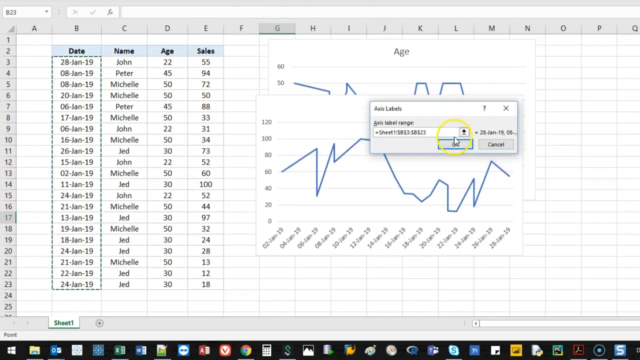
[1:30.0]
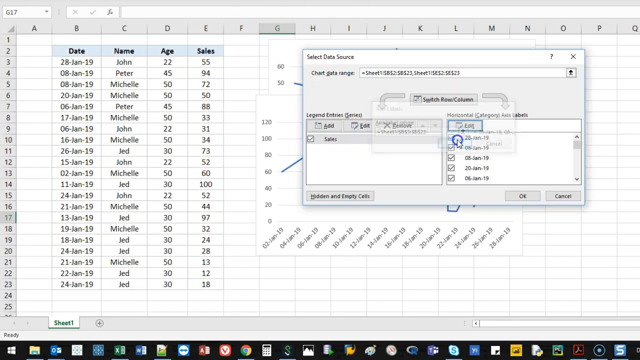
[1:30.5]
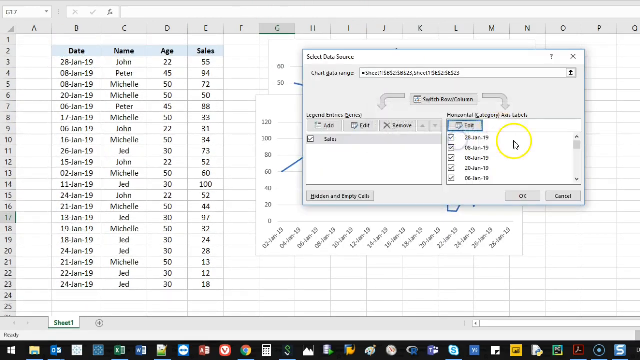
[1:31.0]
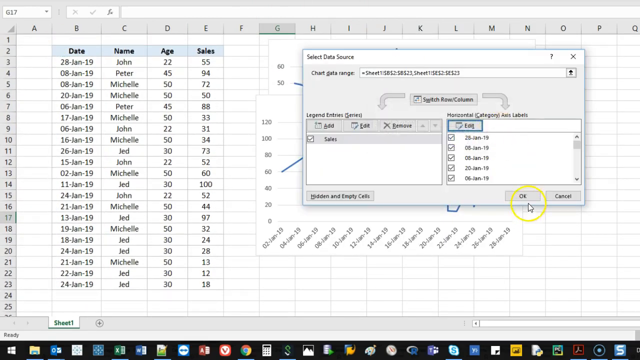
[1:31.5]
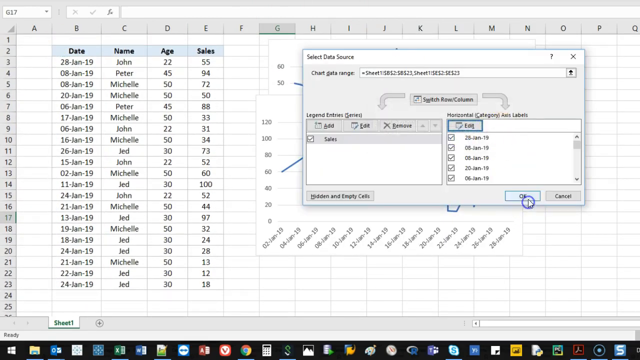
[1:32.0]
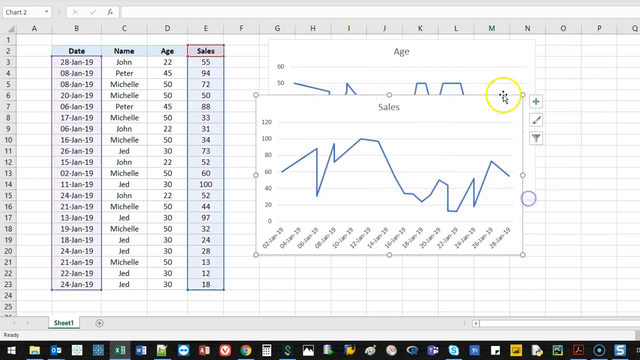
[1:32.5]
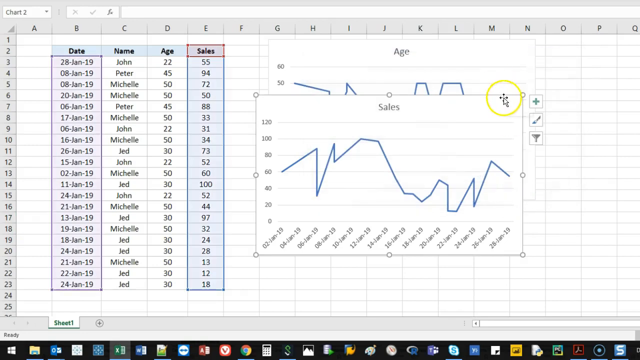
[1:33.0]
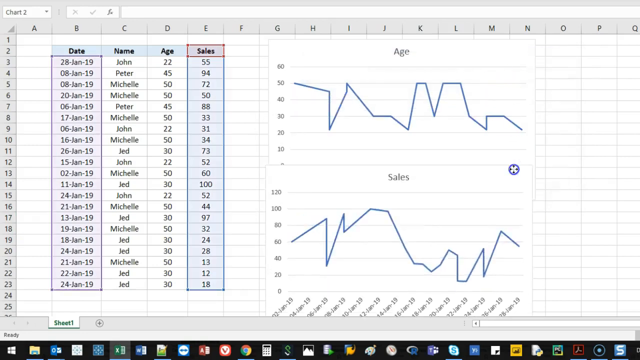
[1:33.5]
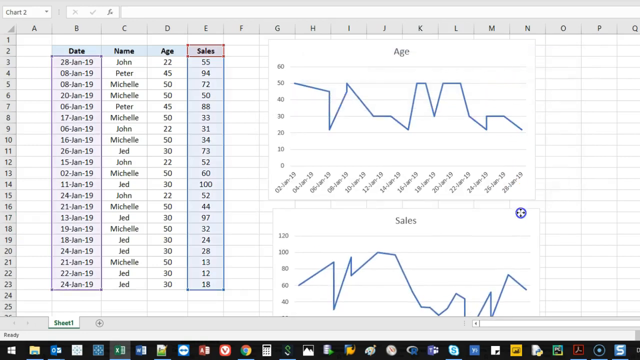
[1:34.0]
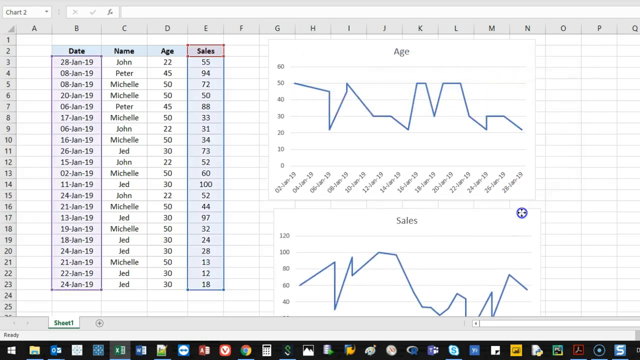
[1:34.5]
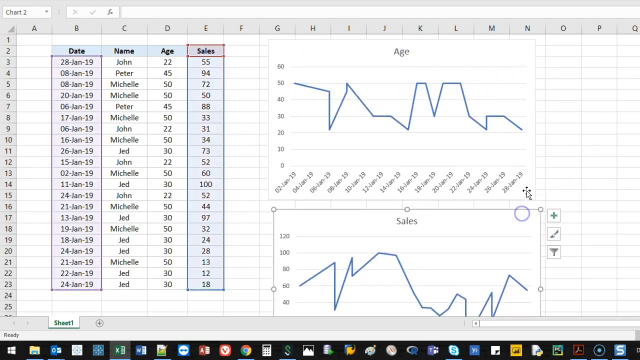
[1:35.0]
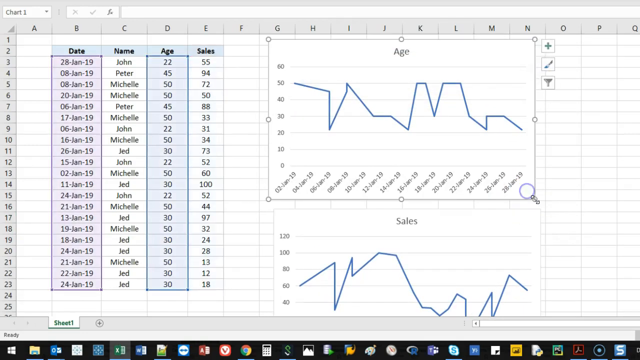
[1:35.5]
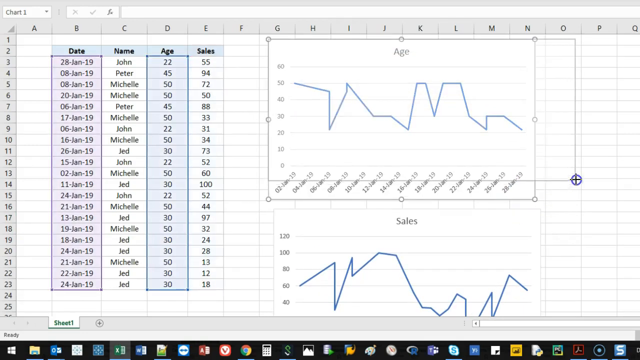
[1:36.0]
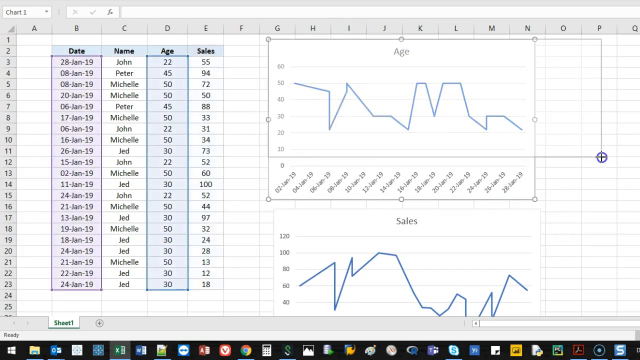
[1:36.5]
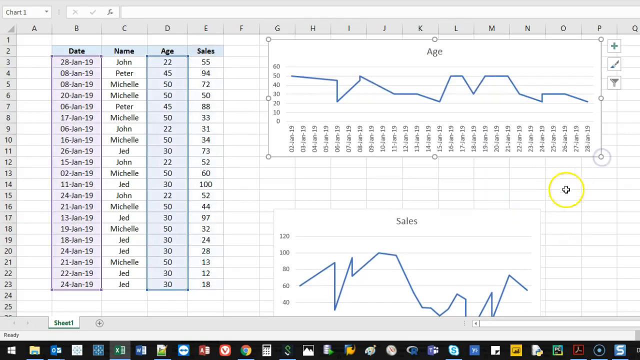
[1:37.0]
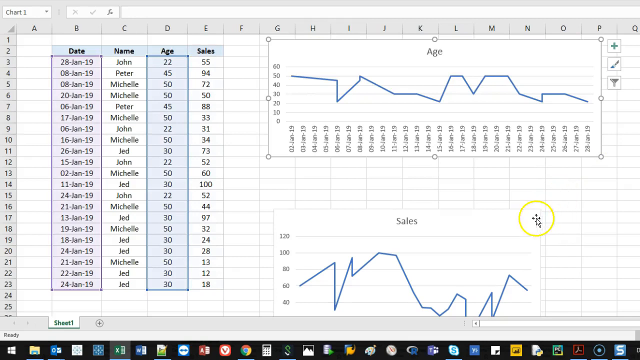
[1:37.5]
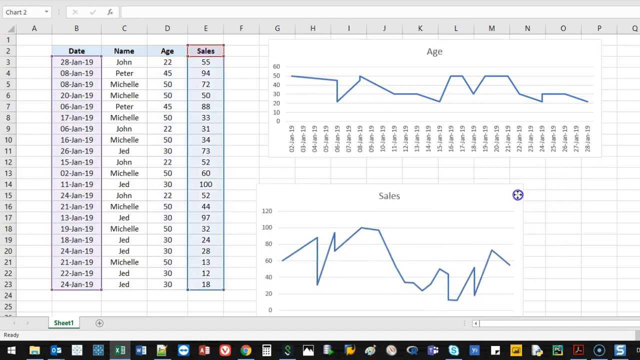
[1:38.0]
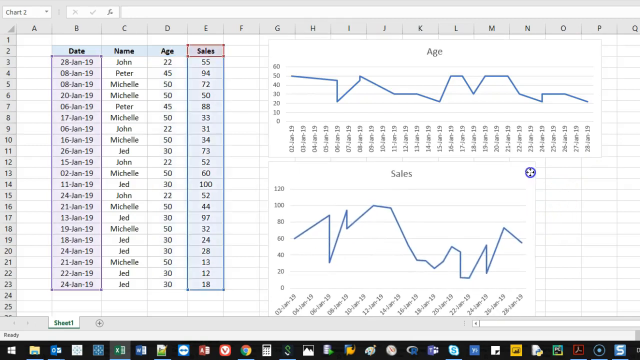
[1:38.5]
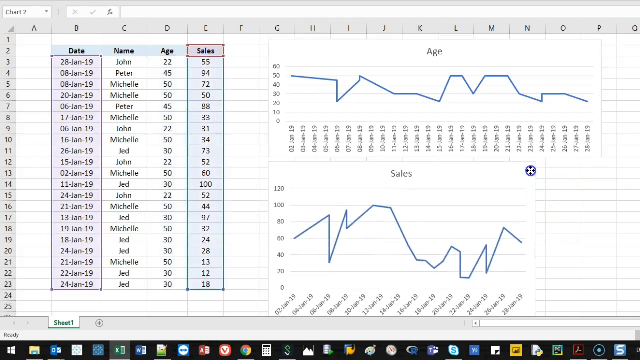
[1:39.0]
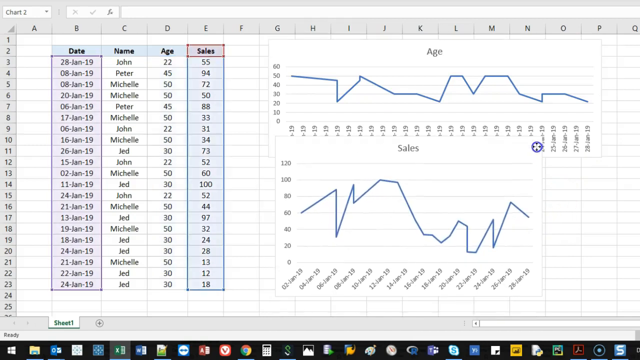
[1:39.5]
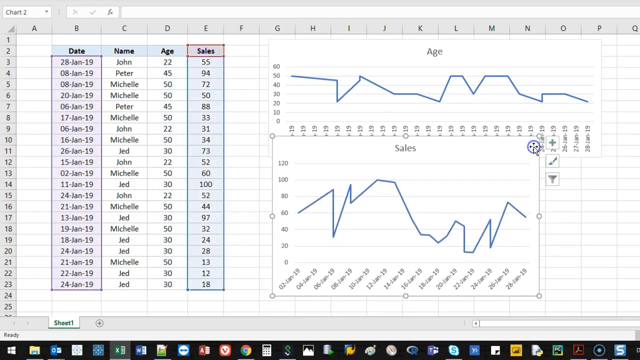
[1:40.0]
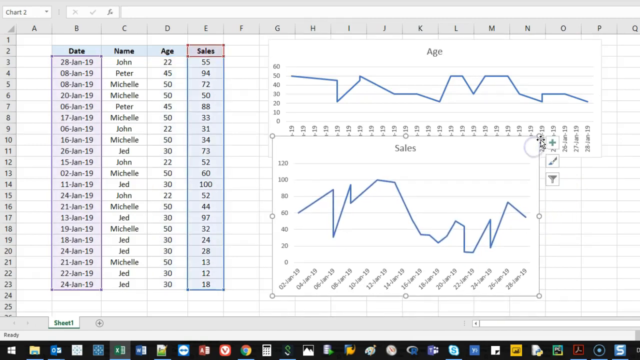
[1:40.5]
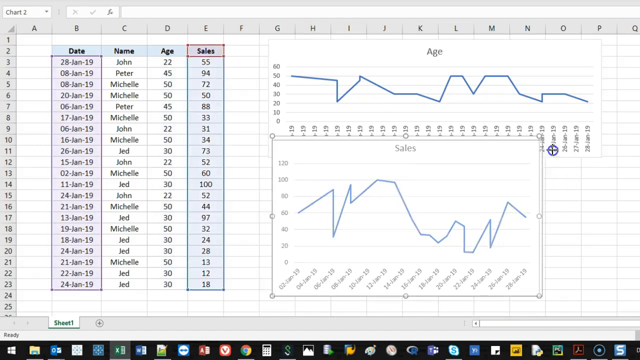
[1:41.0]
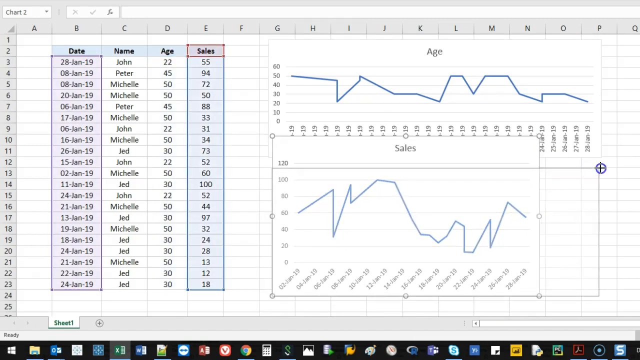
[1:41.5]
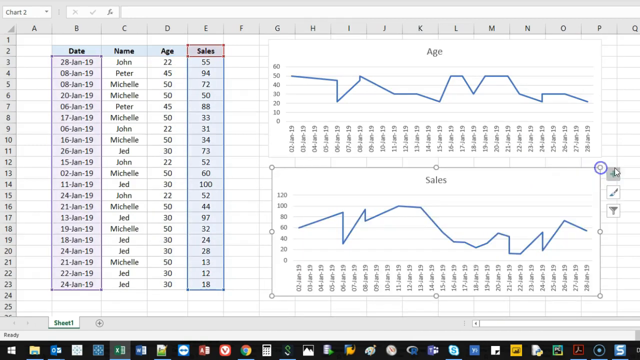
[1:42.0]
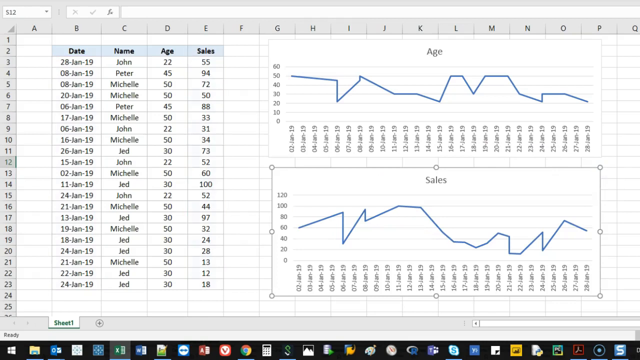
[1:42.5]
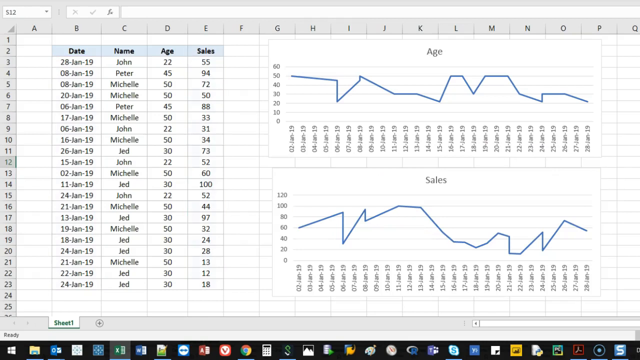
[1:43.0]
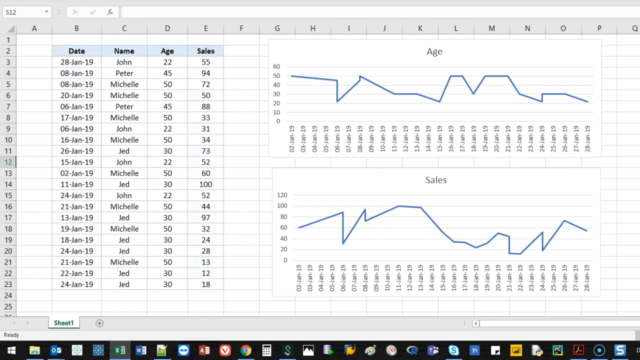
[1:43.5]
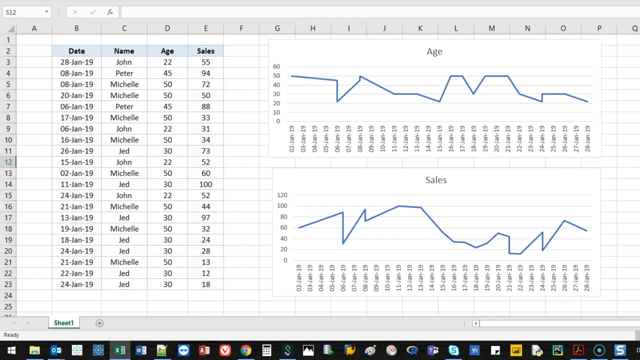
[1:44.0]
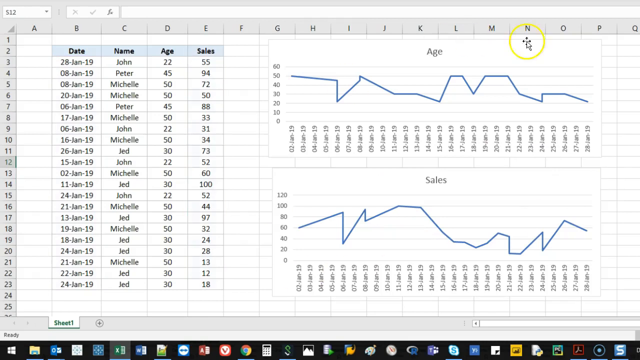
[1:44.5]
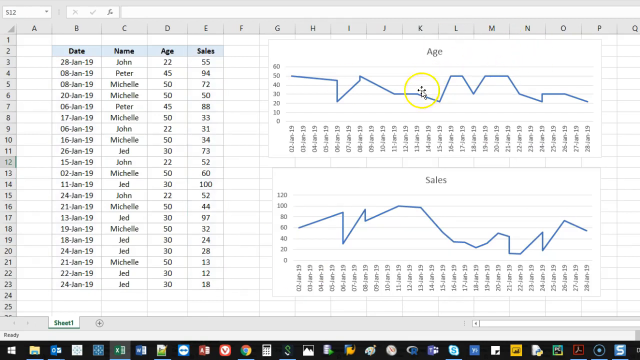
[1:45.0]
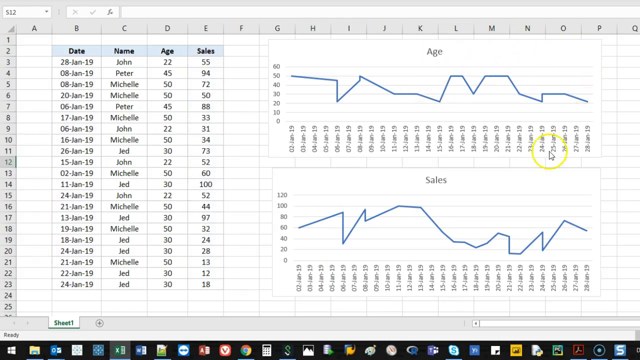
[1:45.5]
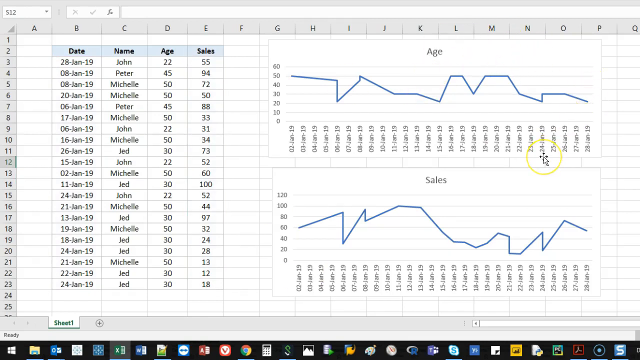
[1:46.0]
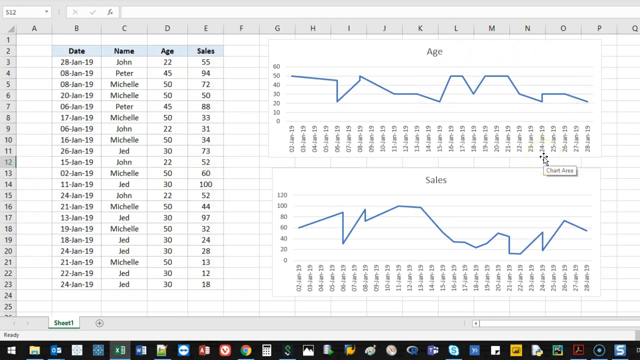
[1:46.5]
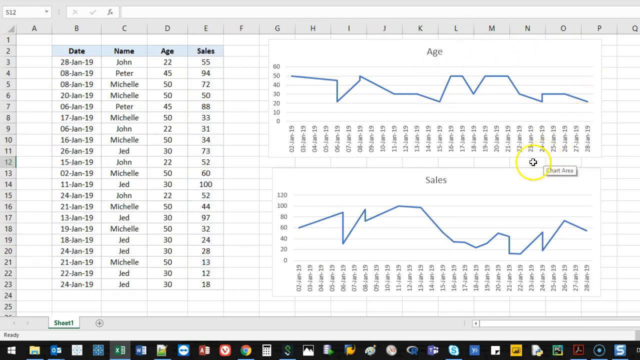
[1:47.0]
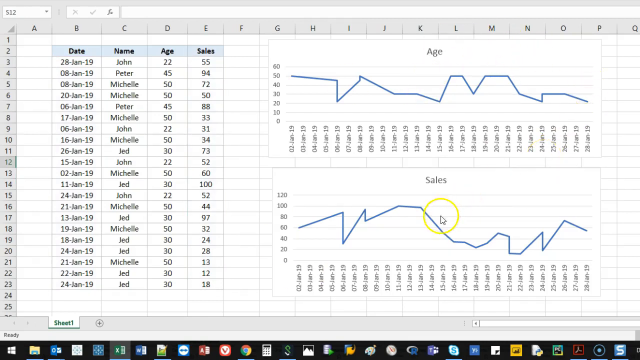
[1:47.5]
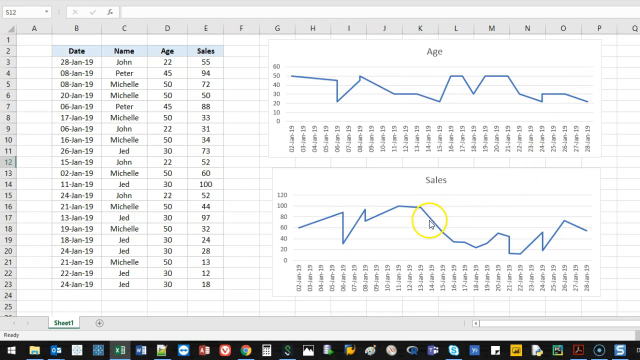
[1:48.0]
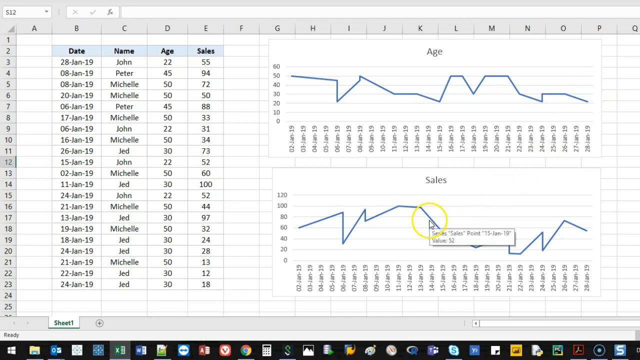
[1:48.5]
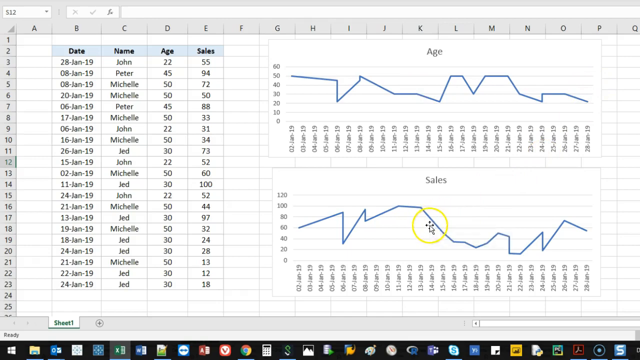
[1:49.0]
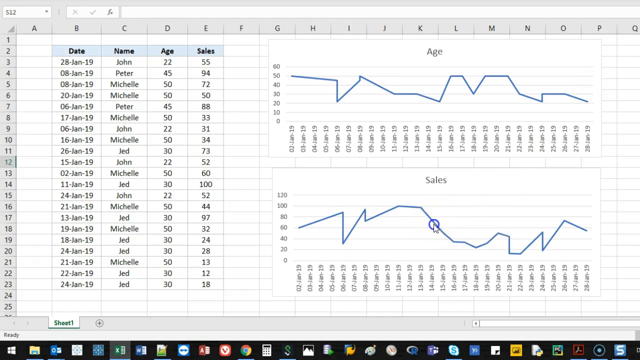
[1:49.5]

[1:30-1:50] The small axis labels window is open with the axis label range value entered. The user clicks OK, returning to the Select Data Source window, and clicks OK there too. Two line graphs are now overlaid on the right side of the spreadsheet, the top one for age and the bottom one for sales. The cursor clicks the top right of the sales line graph and drags it down so it is directly under the age line graph with just a little space underneath. The user then clicks one of the size adjuster circles on the age line graph and makes it shorter and wider. They drag the sales line graph up again so it slightly overlaps the bottom of the age line graph, then use the size adjuster circles on the sales line graph to make it wider, matching the width of the age line graph above it. The cursor hovers over a portion of the line near January 14th, 2019 in the sales graph, and a small white box pops up giving the name, date and volume of sales at that point. The user selects the line, which makes small square boxes appear on various points of the line.